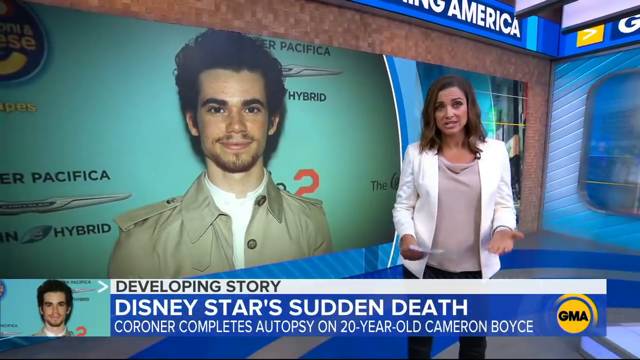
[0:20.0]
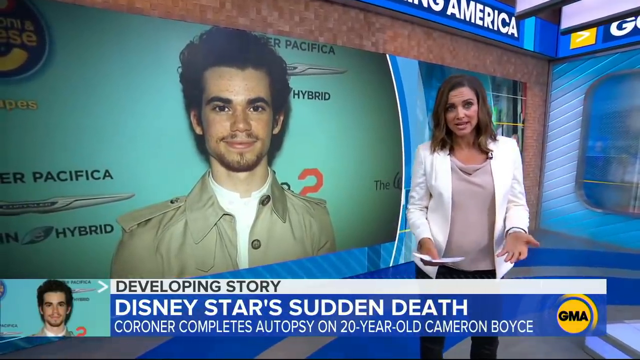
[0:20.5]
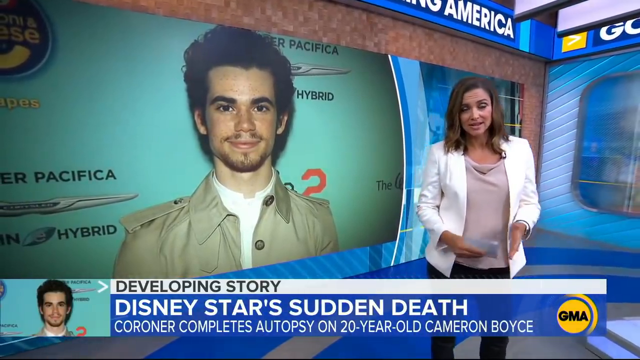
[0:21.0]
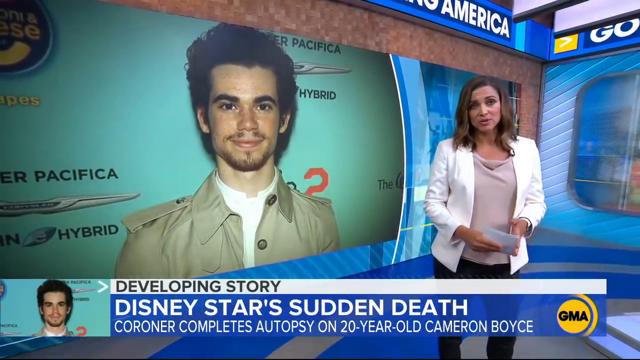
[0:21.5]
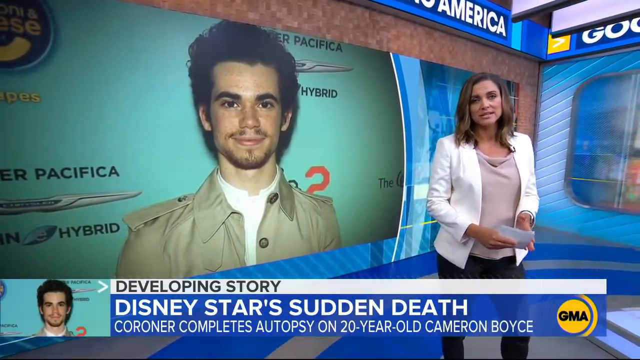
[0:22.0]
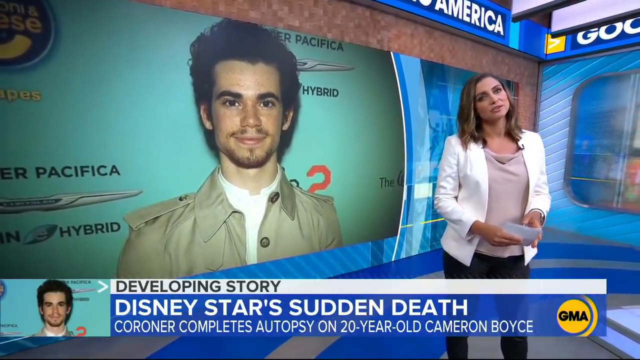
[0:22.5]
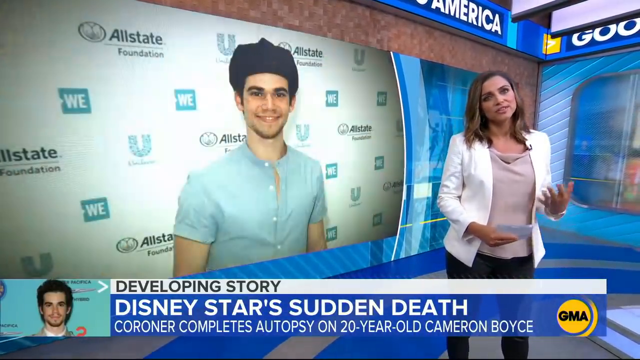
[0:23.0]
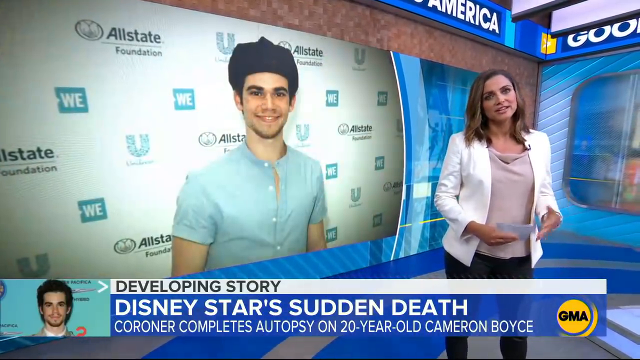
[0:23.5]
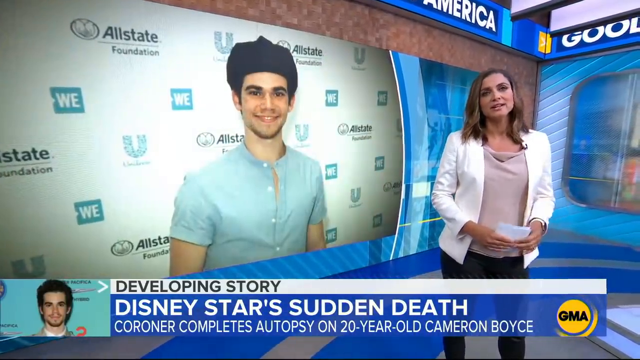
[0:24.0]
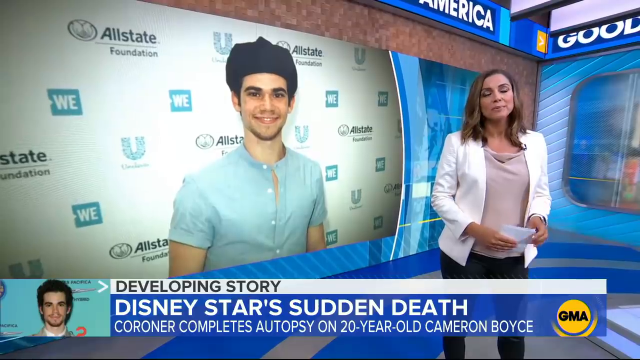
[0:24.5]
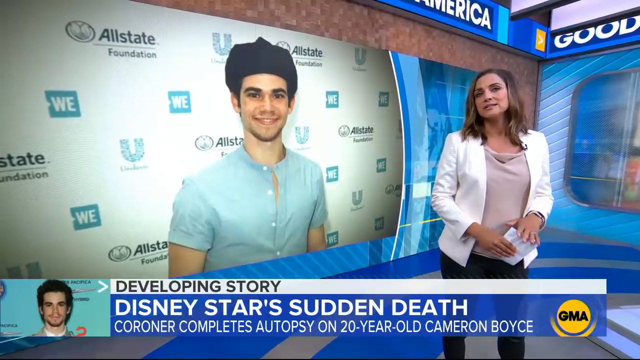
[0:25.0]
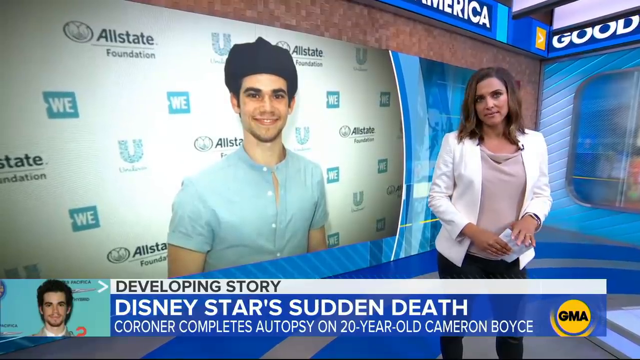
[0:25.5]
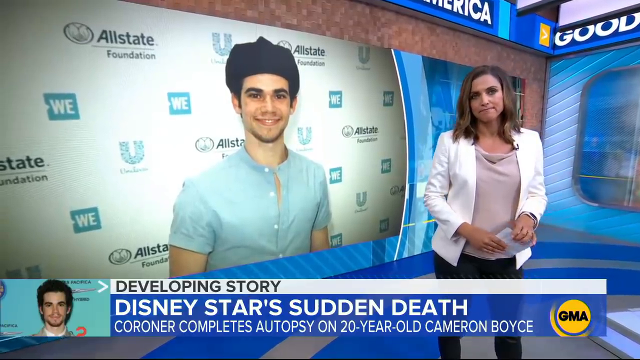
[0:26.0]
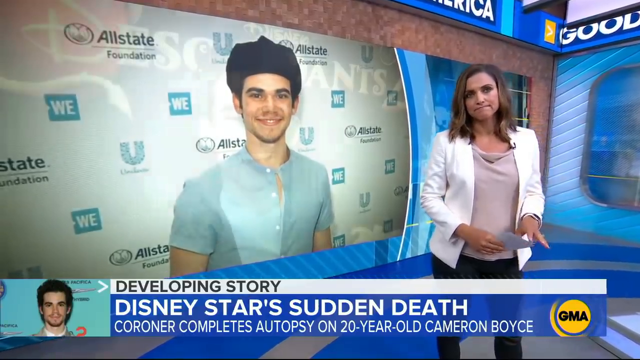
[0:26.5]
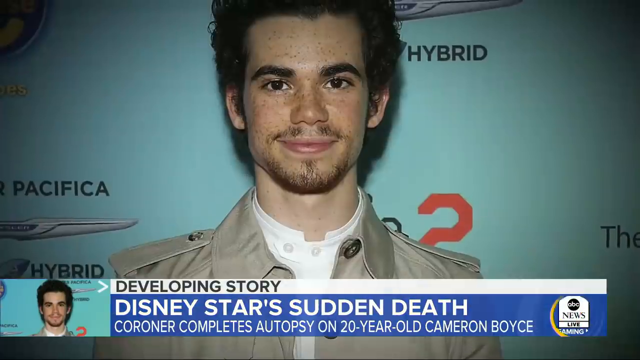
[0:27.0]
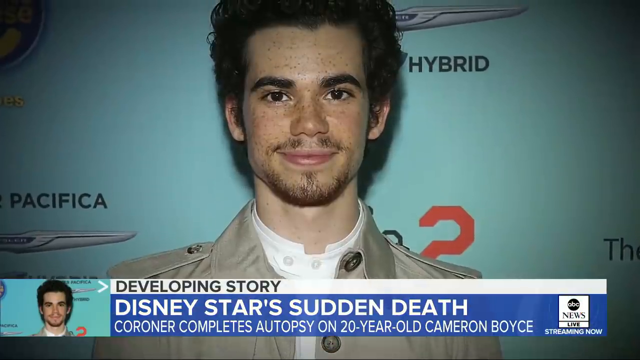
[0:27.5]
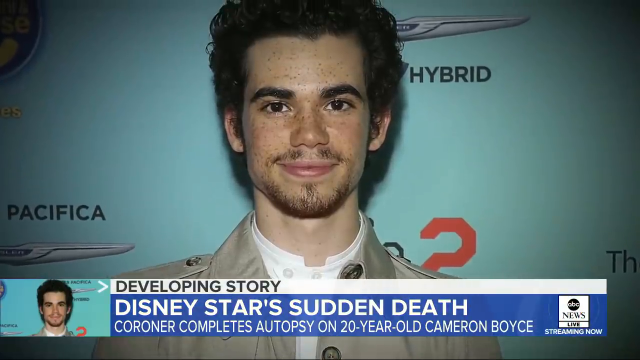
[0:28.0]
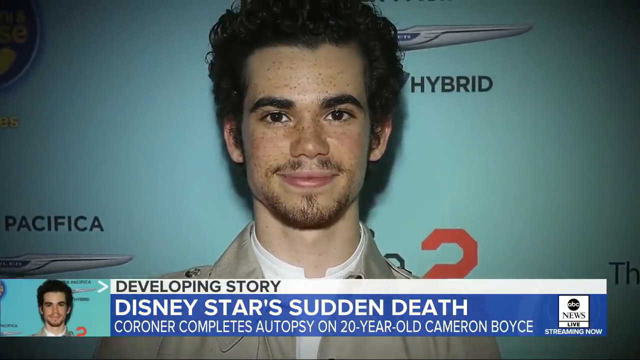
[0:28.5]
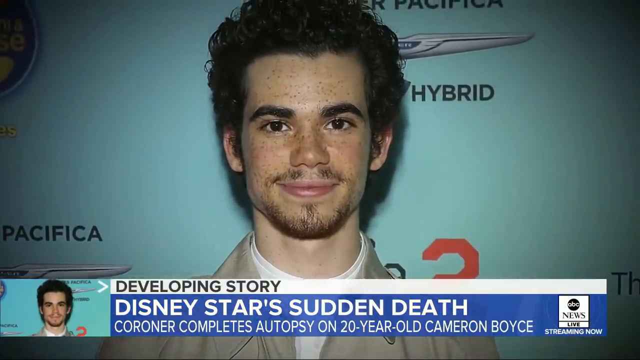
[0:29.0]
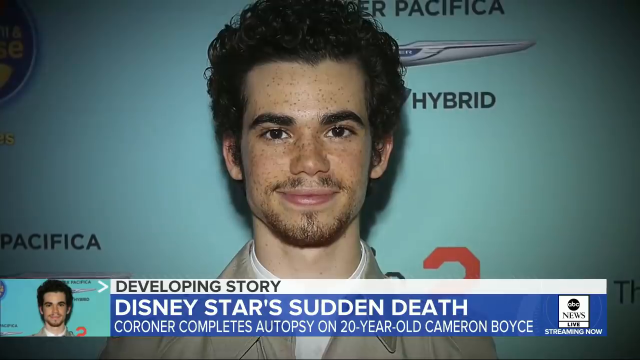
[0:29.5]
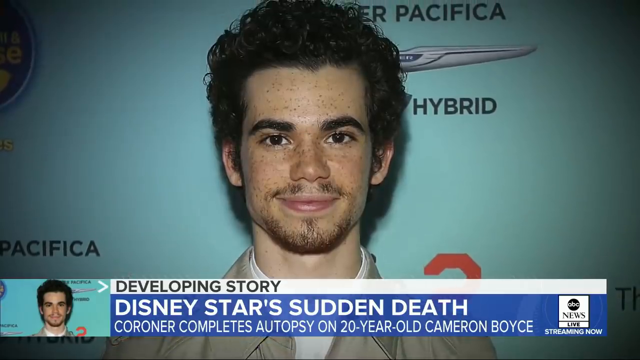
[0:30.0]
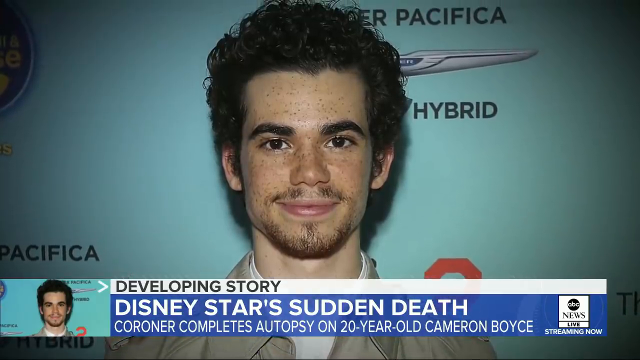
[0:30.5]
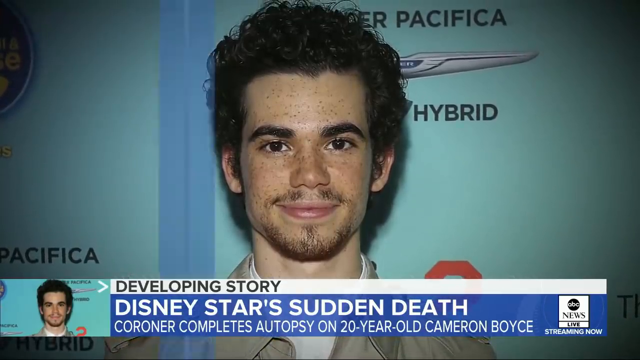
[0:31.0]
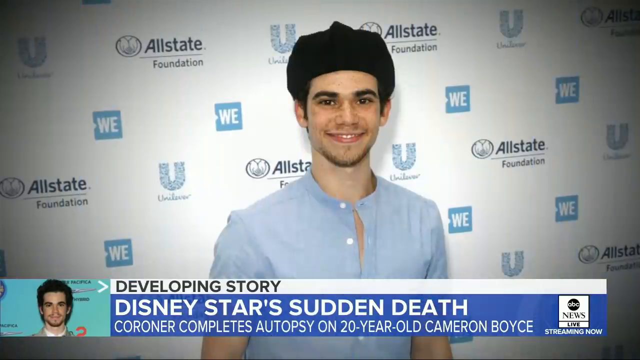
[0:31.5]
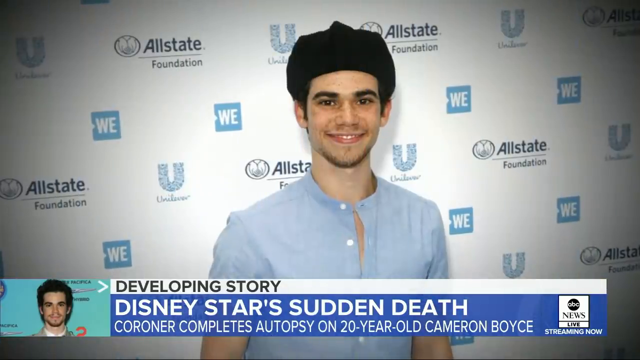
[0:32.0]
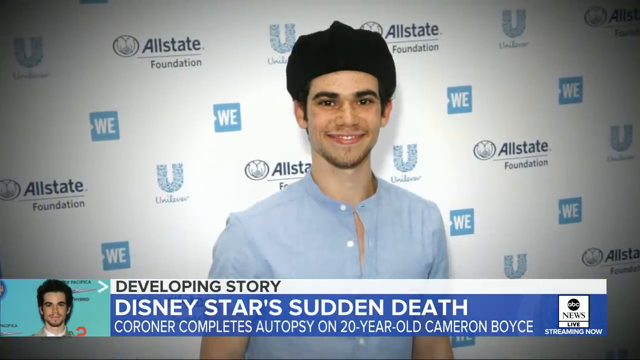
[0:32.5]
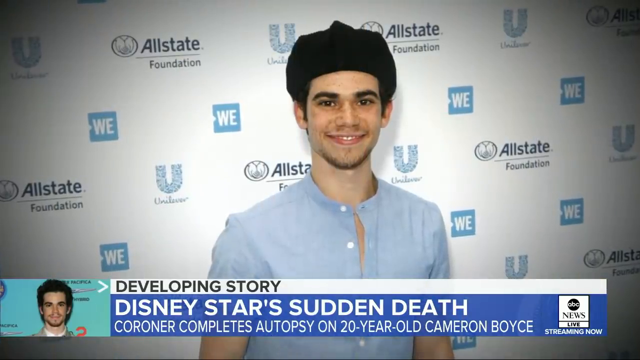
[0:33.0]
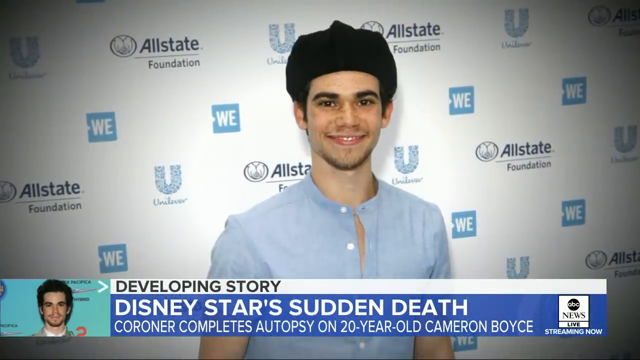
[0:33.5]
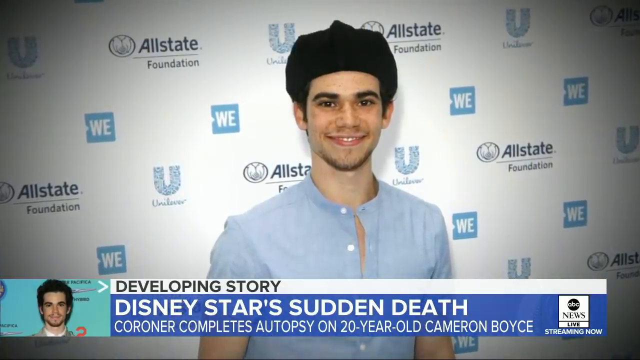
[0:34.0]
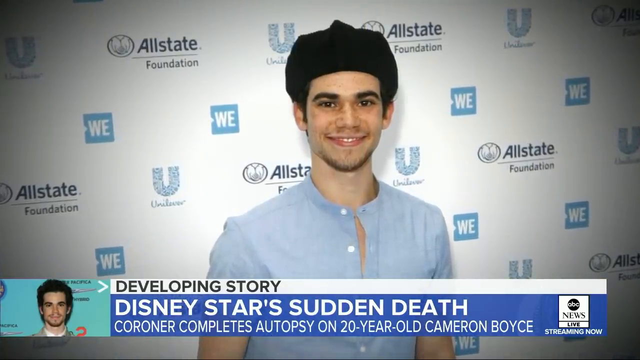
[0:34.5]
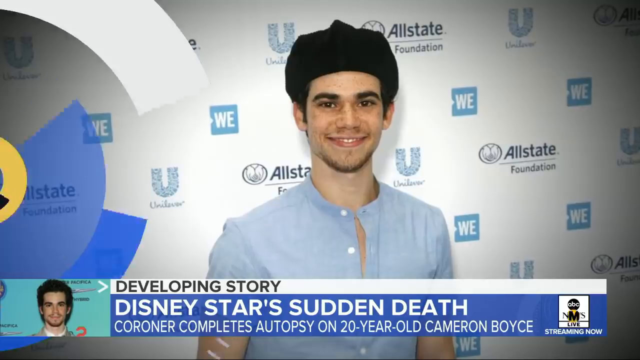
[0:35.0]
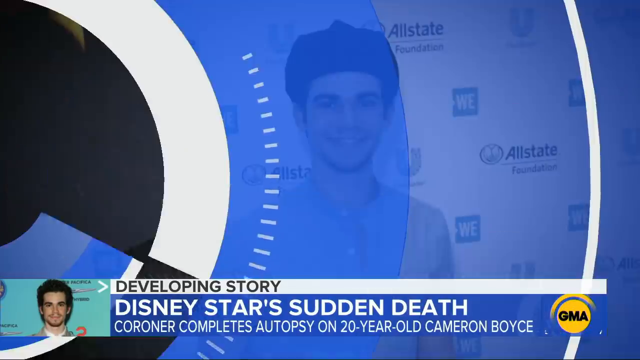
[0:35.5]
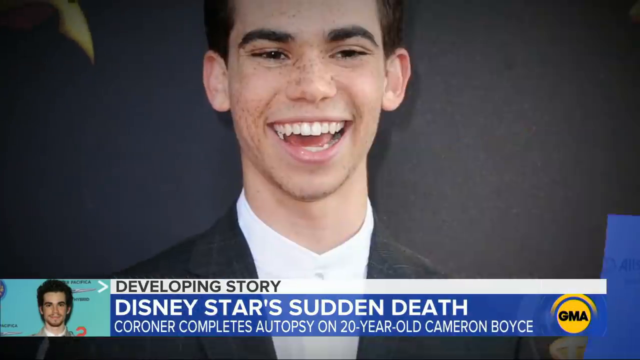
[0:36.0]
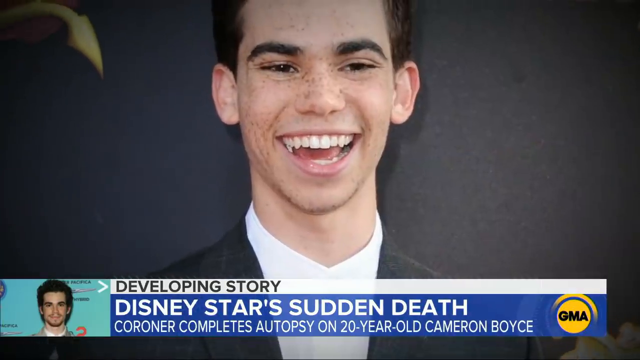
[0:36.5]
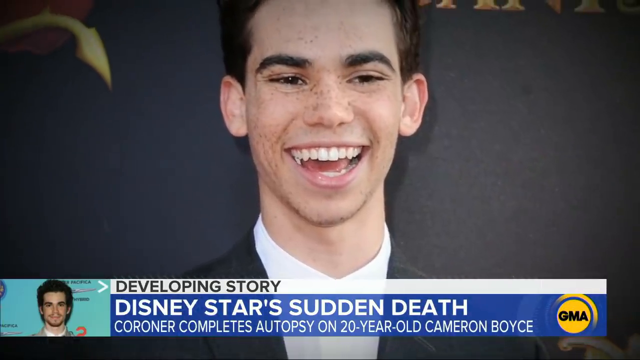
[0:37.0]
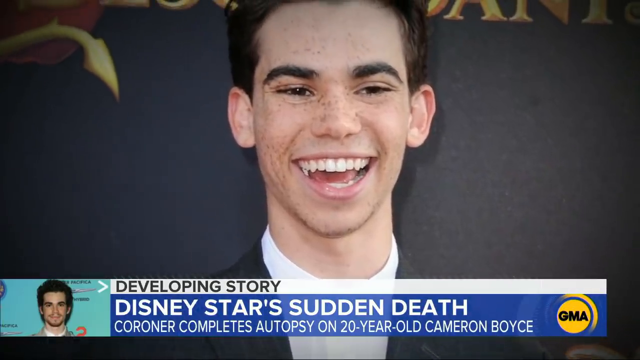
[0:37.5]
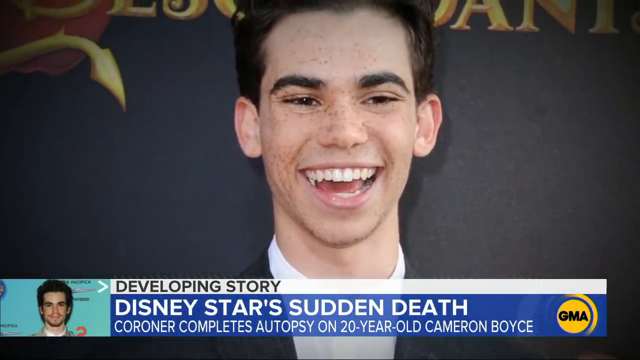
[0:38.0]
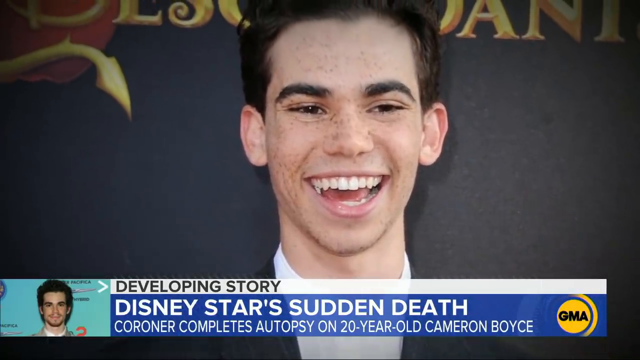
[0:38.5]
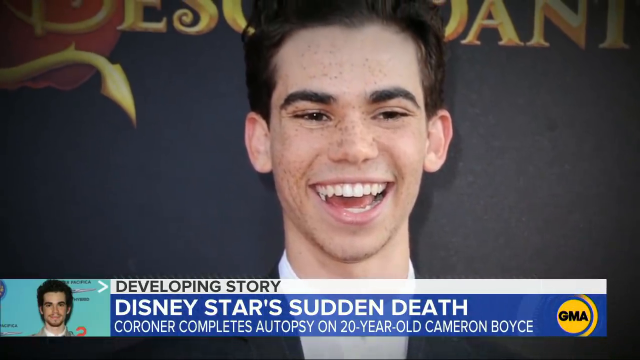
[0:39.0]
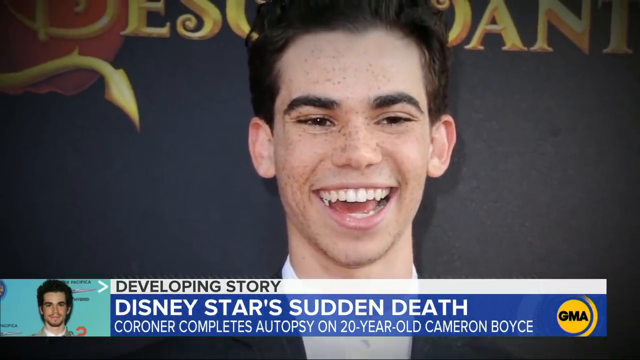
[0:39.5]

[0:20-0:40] The woman in the white blazer stares at the camera with the screen behind her. The image on the screen changes to show Cameron Boyce in a short-sleeved blue button-up shirt and a black hat, standing in front of a WE Allstate Foundation backdrop. The woman stops speaking and the photo changes again very briefly. The next shot shows mainly the backdrop, with the photo of him in the trench coat, and the camera pans from the lower part of his chest up to his face. The photo then changes back to the short-sleeved blue button-up photo. A transition with different shapes leads to the next photo, which shows Cameron Boyce in a black blazer and white shirt, smiling with his mouth open.